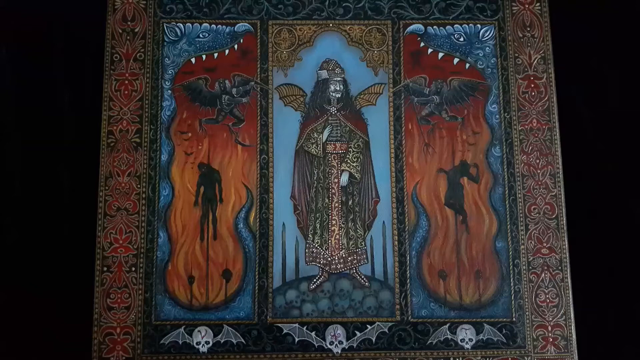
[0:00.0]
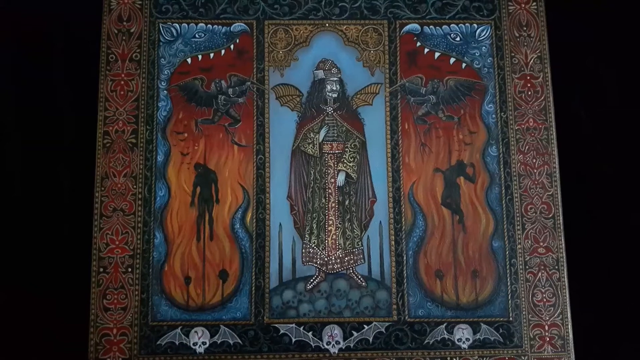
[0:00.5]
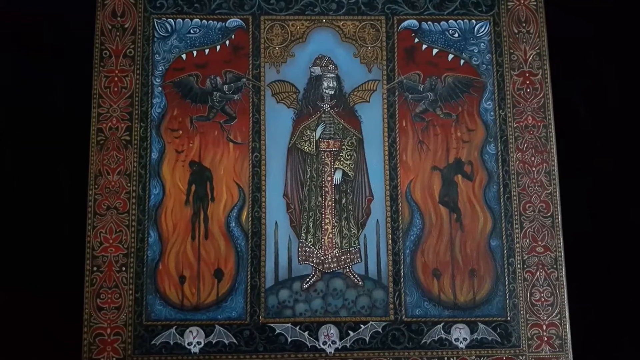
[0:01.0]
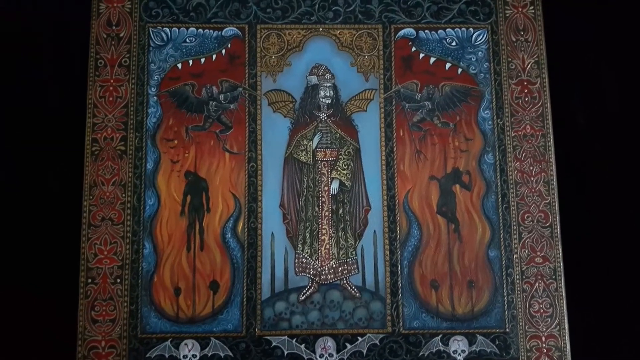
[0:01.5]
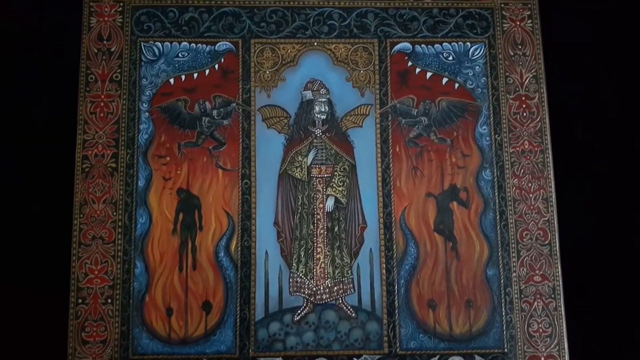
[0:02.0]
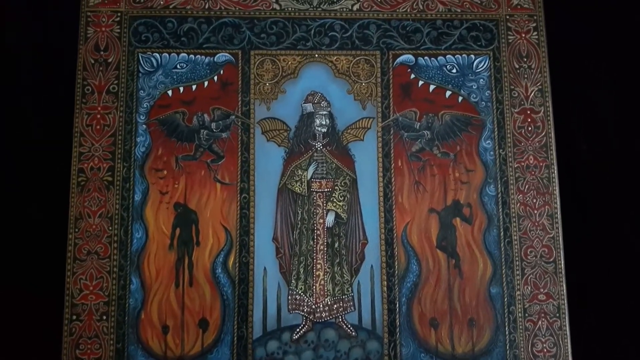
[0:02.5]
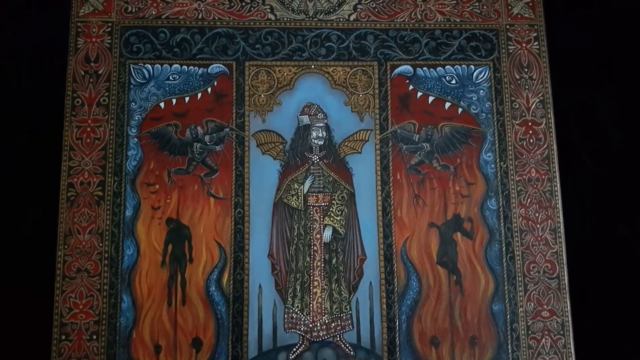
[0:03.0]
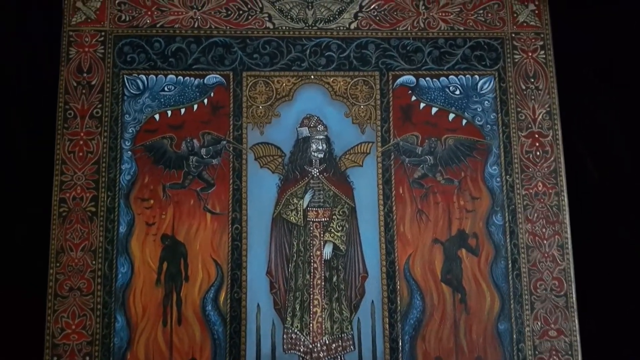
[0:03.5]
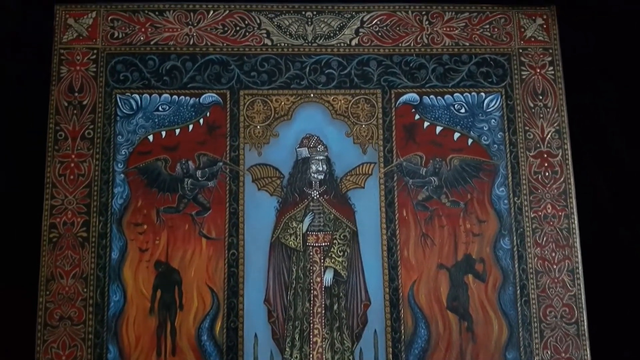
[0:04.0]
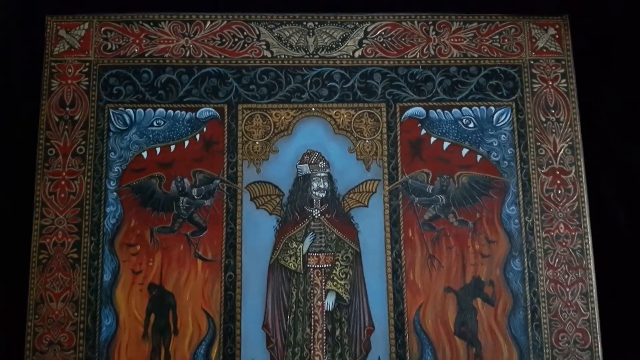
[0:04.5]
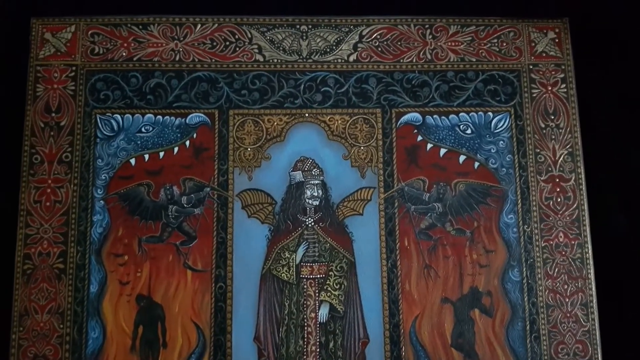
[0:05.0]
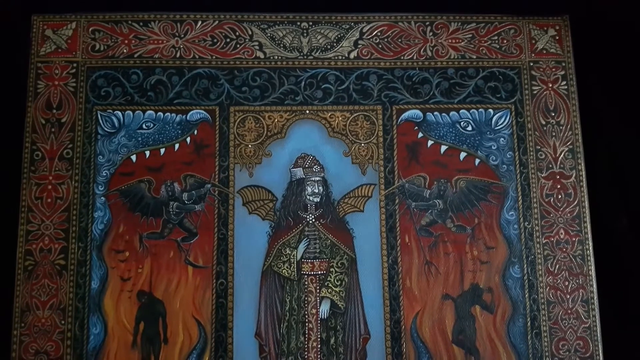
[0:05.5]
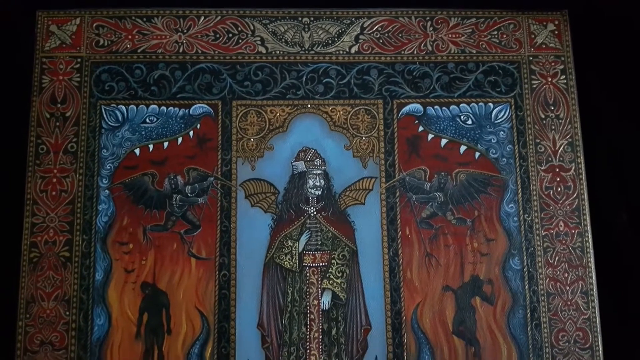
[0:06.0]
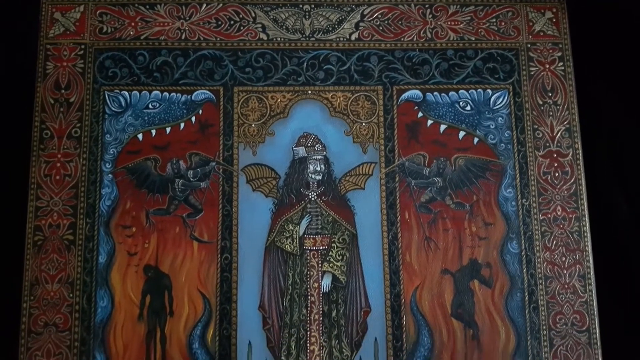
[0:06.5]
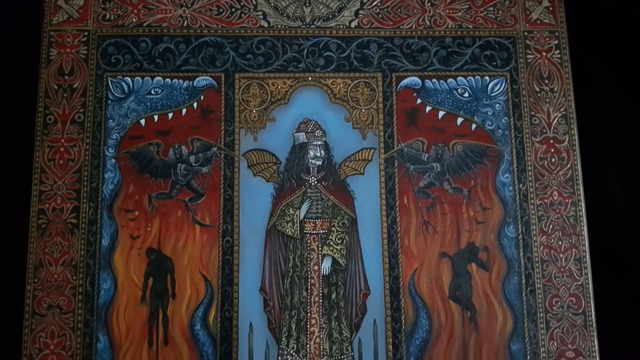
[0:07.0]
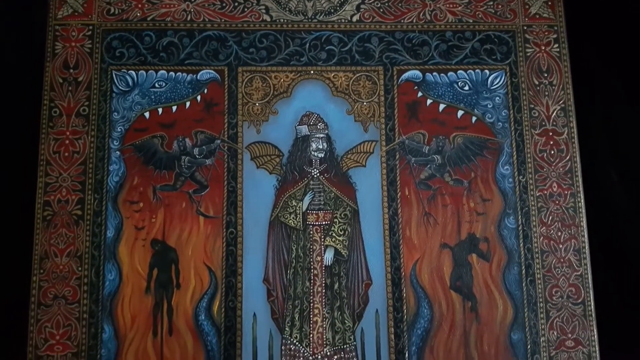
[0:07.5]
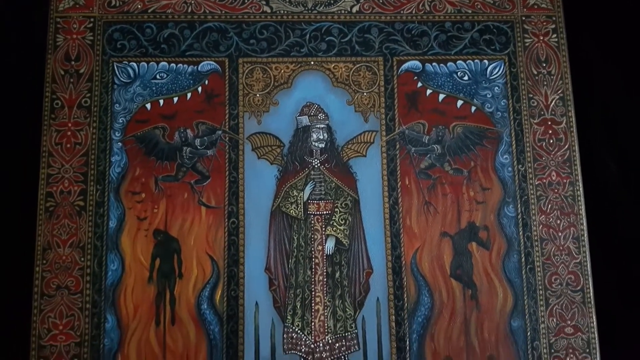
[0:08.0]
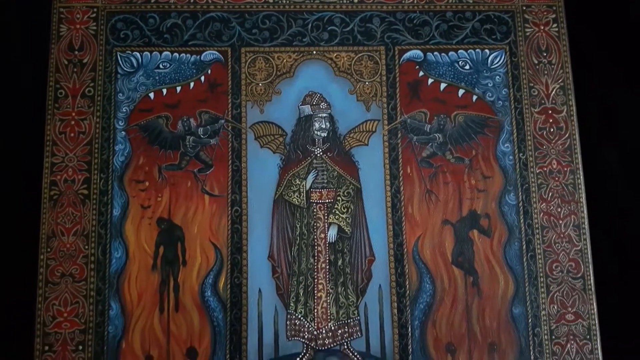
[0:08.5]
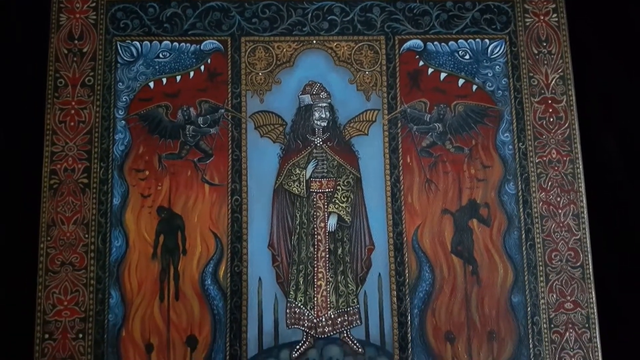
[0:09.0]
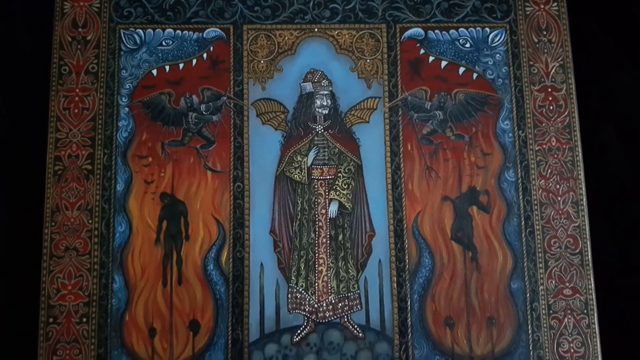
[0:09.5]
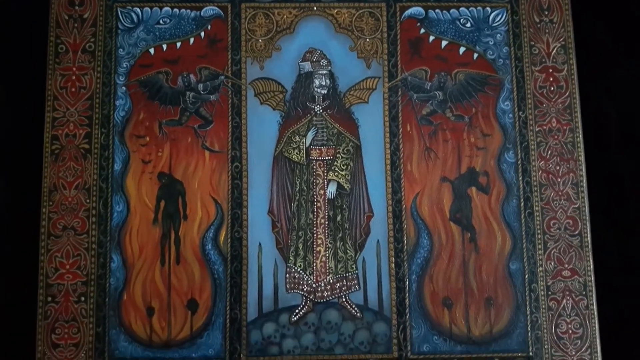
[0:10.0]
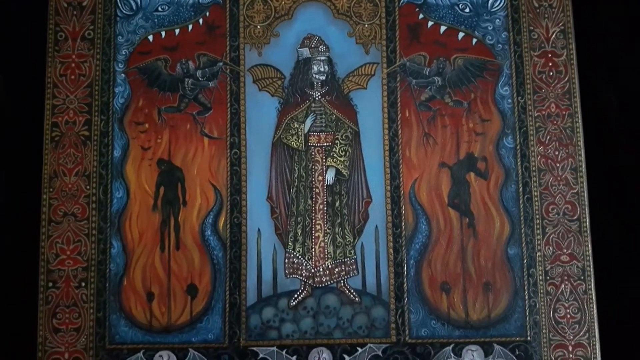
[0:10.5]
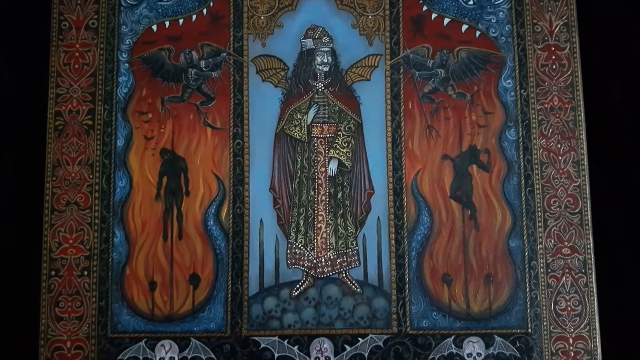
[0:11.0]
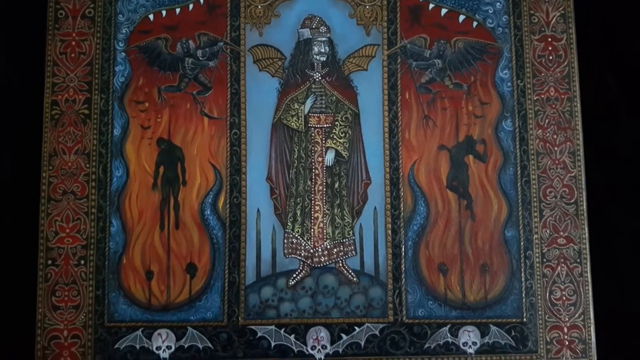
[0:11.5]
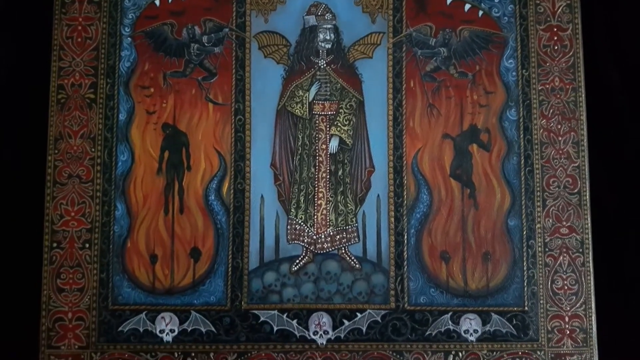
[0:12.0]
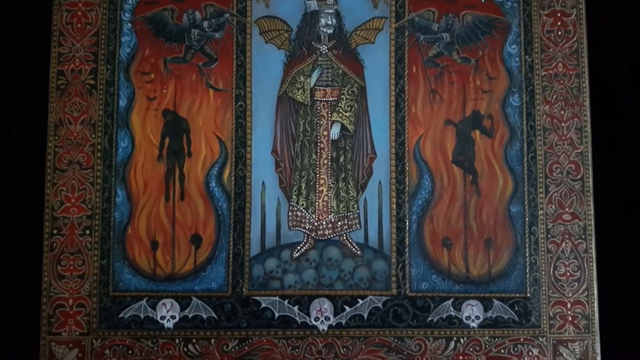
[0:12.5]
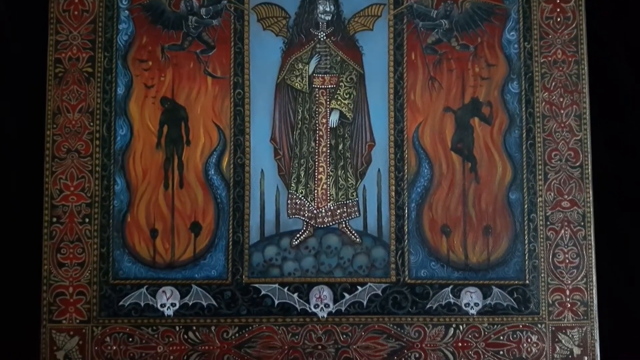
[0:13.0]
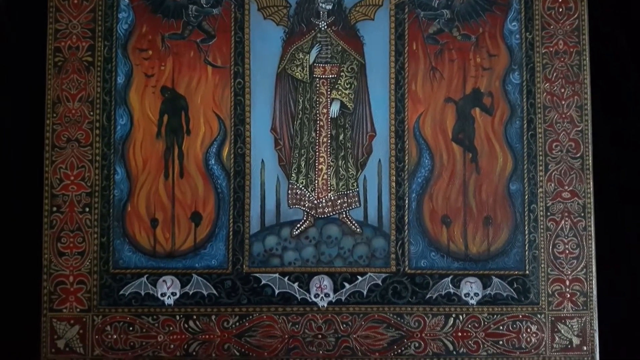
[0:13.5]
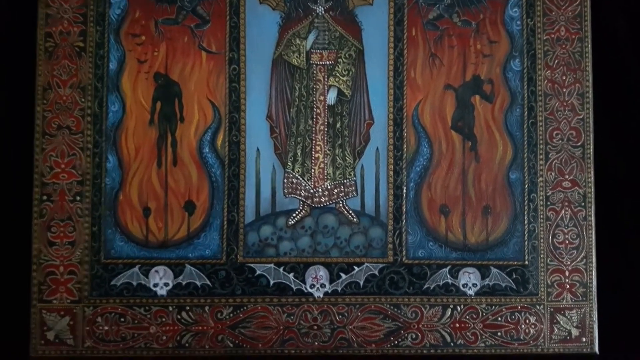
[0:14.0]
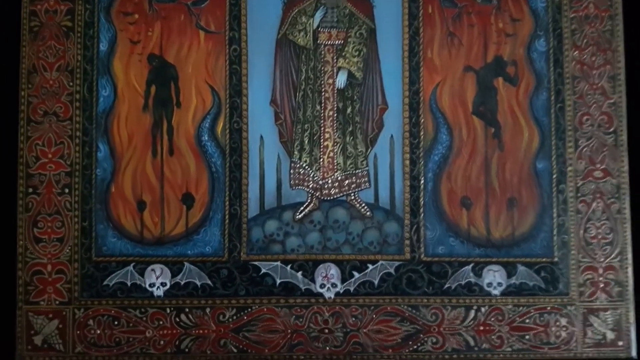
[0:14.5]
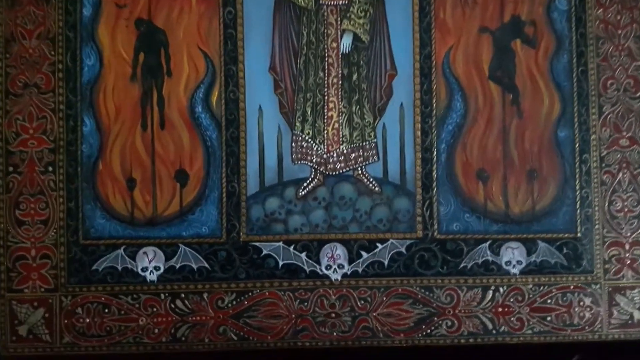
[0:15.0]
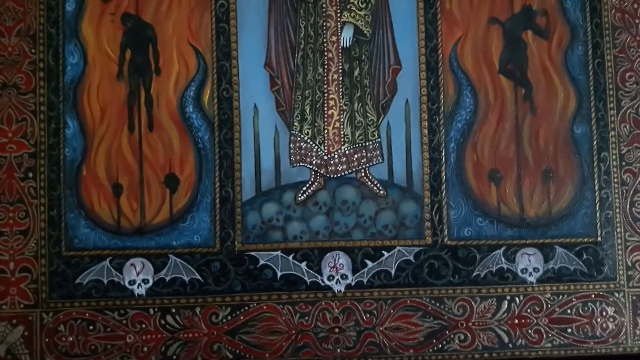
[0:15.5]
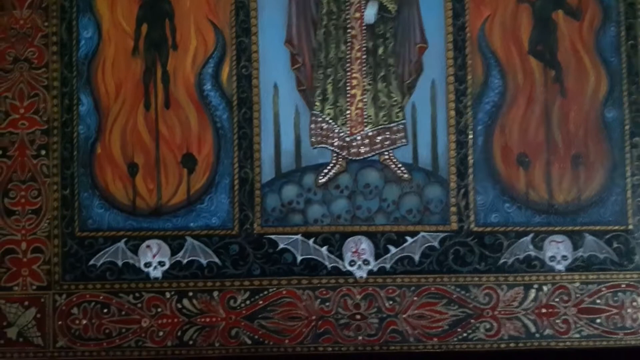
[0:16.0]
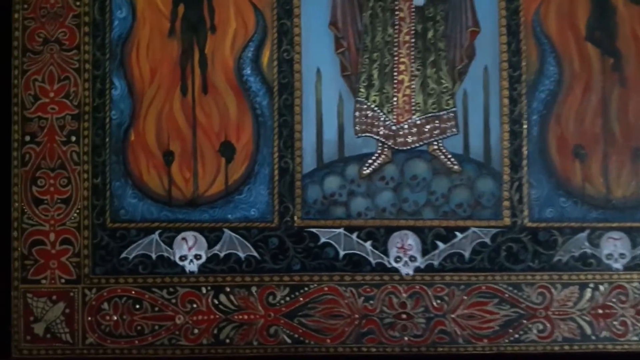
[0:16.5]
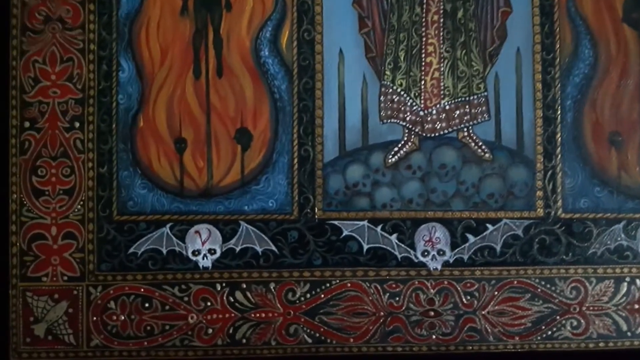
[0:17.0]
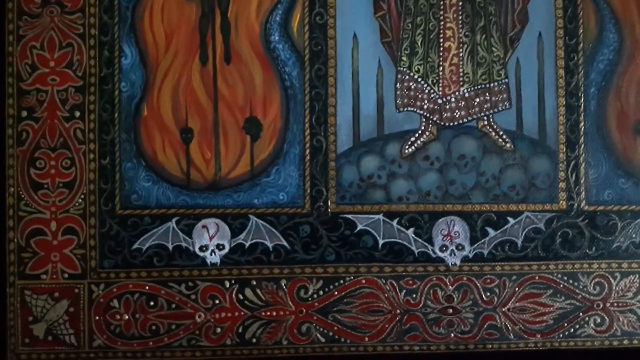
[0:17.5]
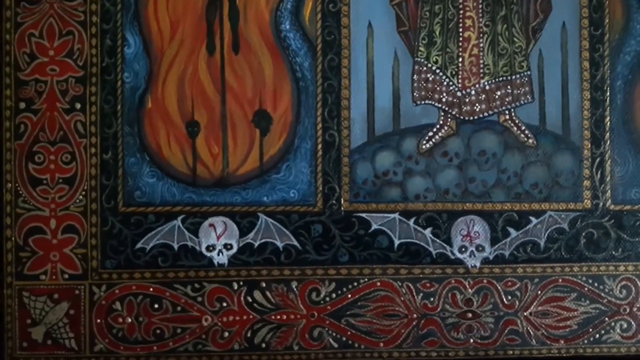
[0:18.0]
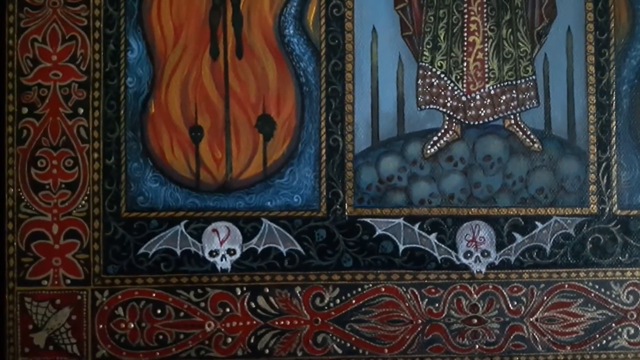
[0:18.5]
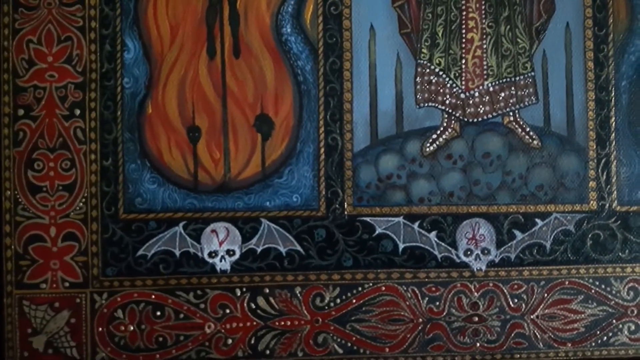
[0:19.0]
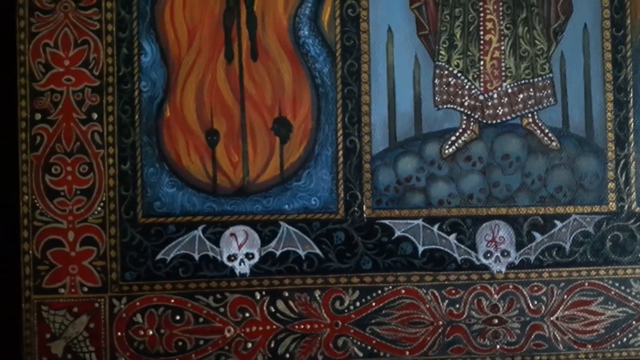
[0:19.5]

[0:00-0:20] A close-up shows an artistic piece that appears to depict Vlad the Impaler. He is centered along the middle, with bat wings on his right and left shoulders, wearing traditional Slavic dress against a blue background. The depictions to the left and right appear to show hell, with two souls in torment and flying demons around them as flames lick their feet. The art is bordered with a stylistic drawing of two monsters with gaping mouths, and a very refined stylistic border is etched along the outside. The art appears to be some type of pearl inlay and has a very soft, glossy texture. The video zooms in close on the details, showing three skulls on the bottom, each with bat wings on the outside, and bats depicted in all four corners of the art piece.